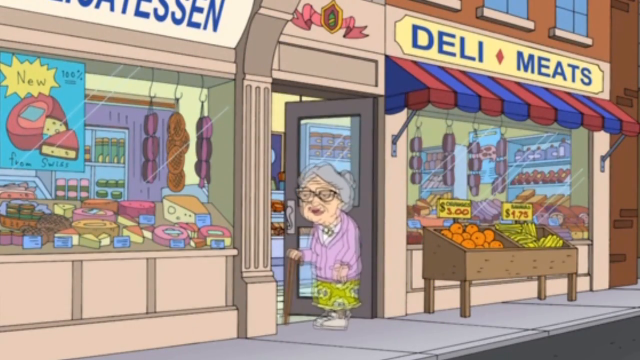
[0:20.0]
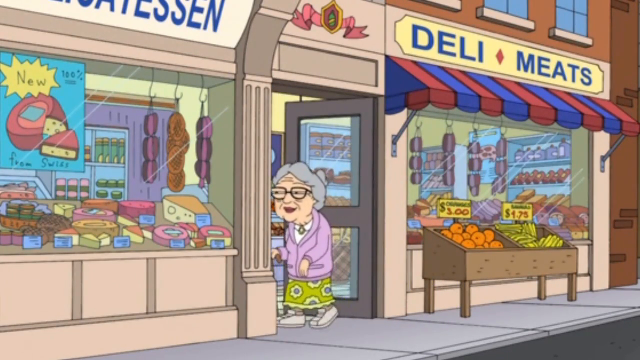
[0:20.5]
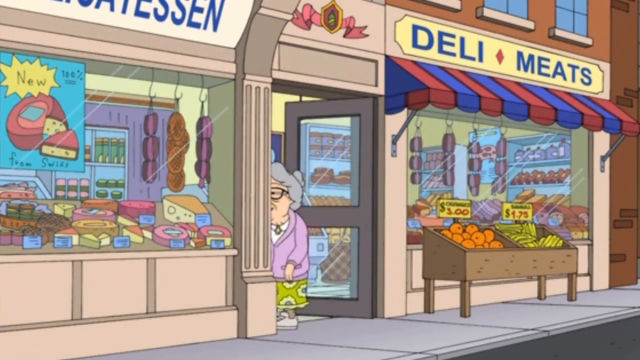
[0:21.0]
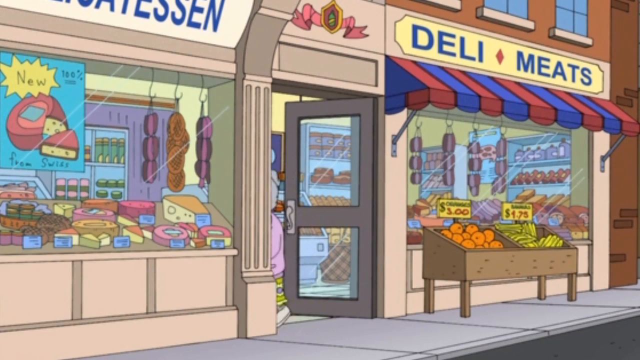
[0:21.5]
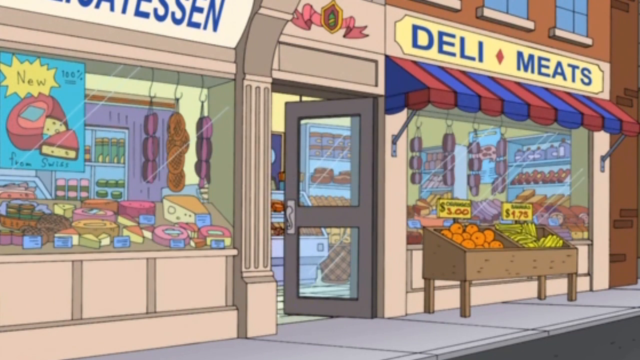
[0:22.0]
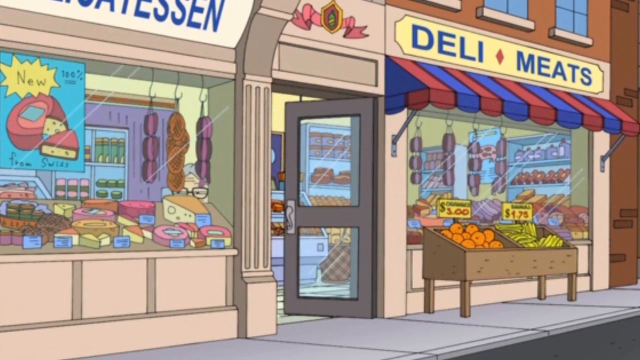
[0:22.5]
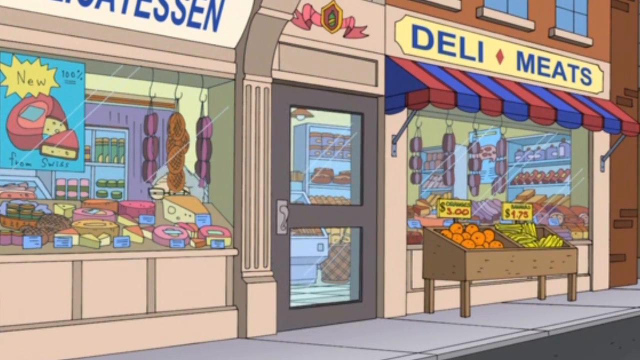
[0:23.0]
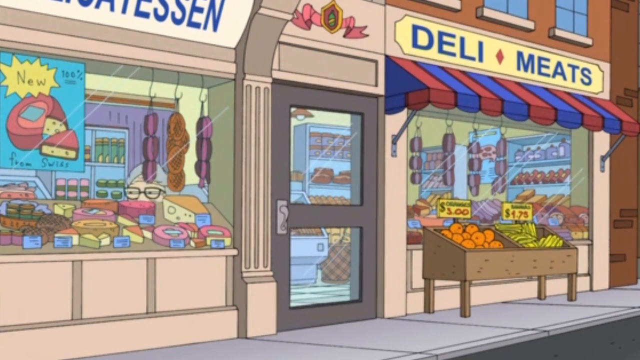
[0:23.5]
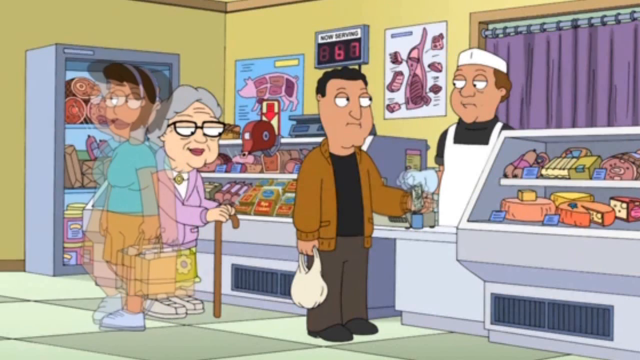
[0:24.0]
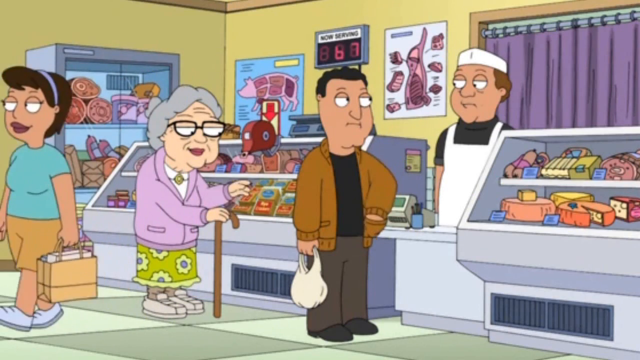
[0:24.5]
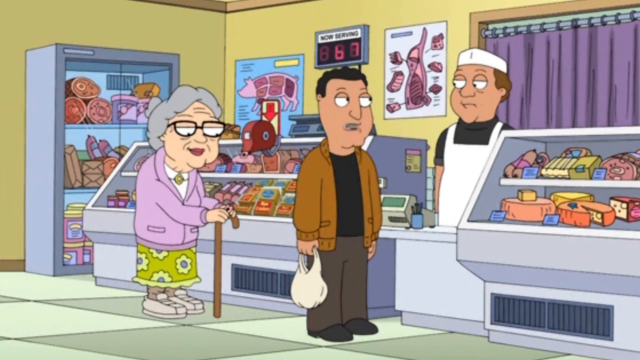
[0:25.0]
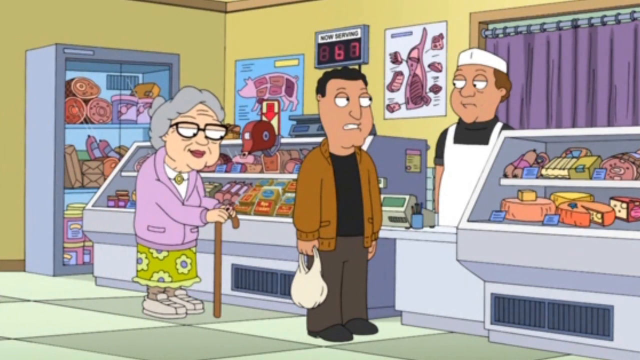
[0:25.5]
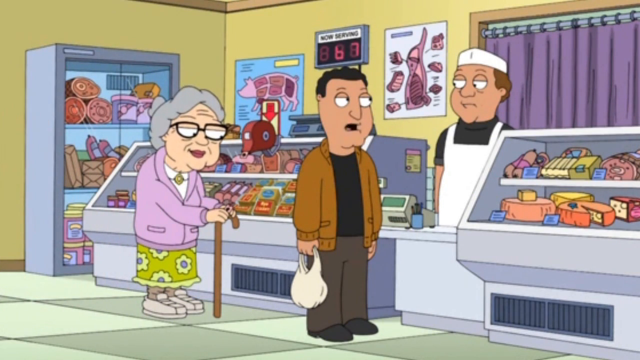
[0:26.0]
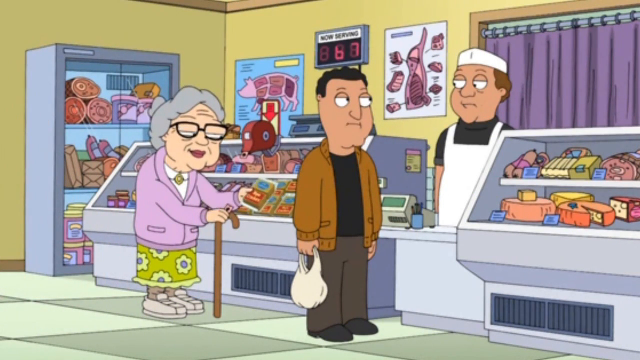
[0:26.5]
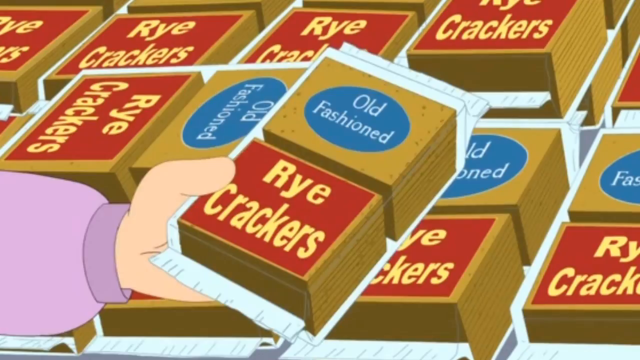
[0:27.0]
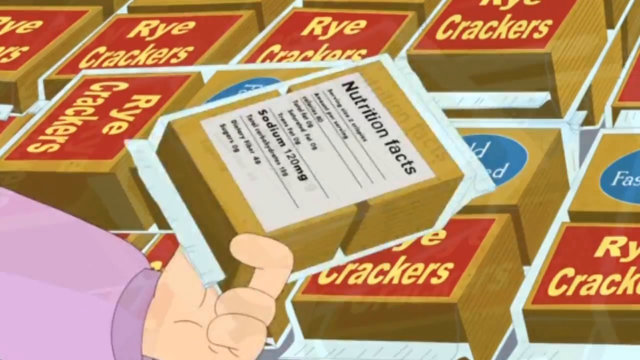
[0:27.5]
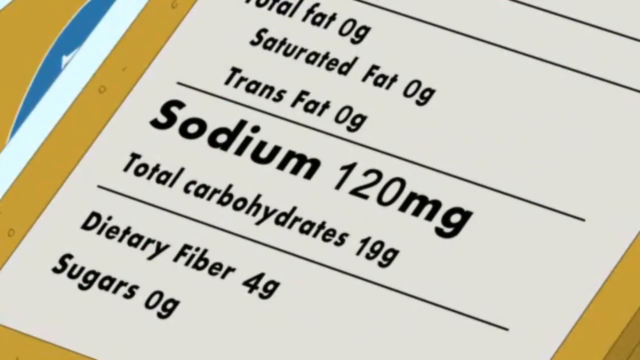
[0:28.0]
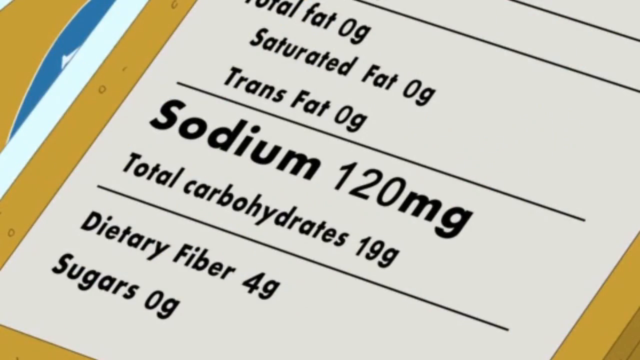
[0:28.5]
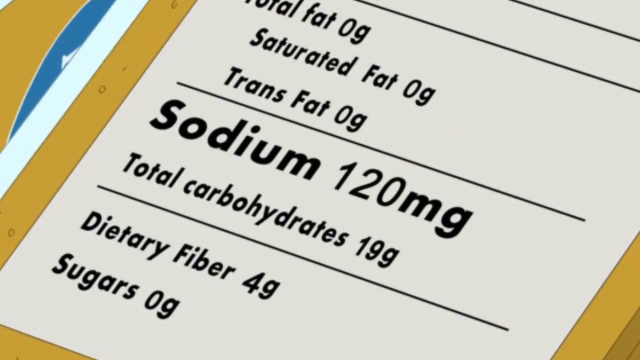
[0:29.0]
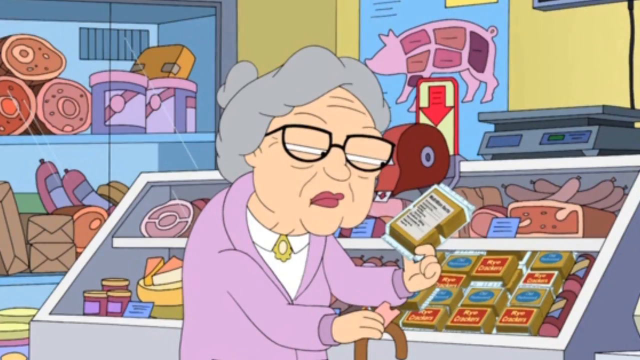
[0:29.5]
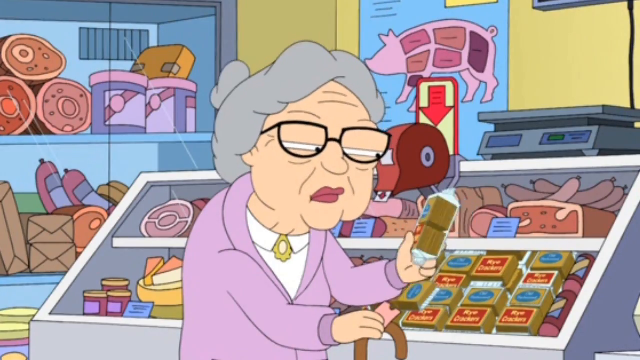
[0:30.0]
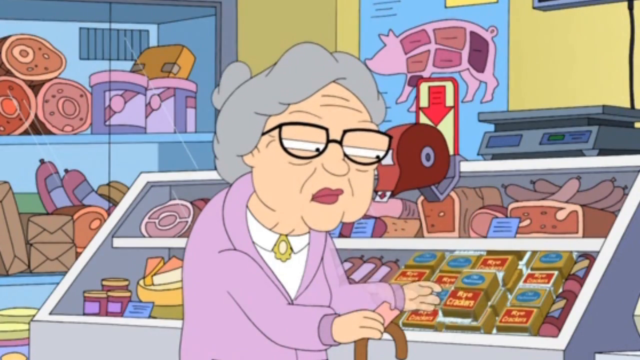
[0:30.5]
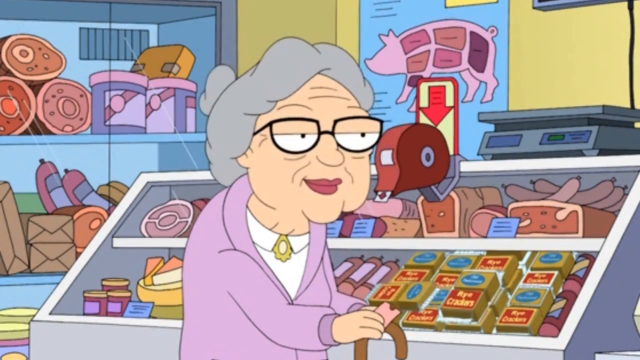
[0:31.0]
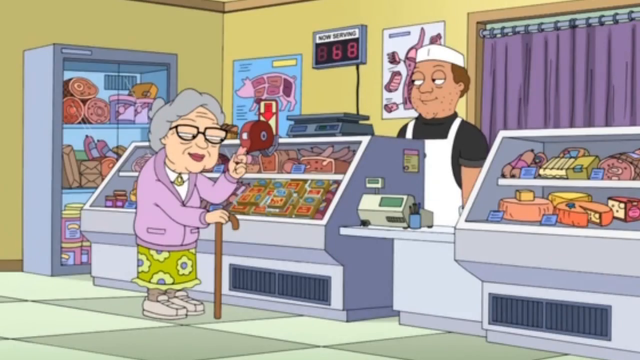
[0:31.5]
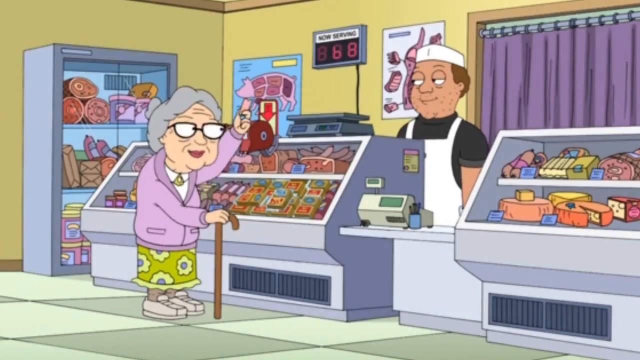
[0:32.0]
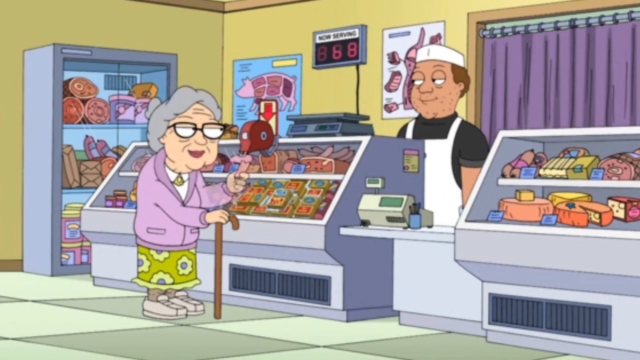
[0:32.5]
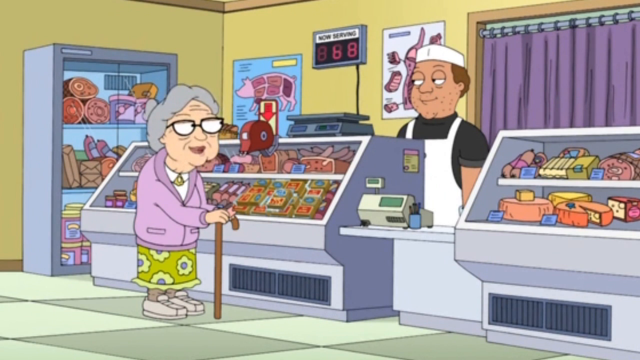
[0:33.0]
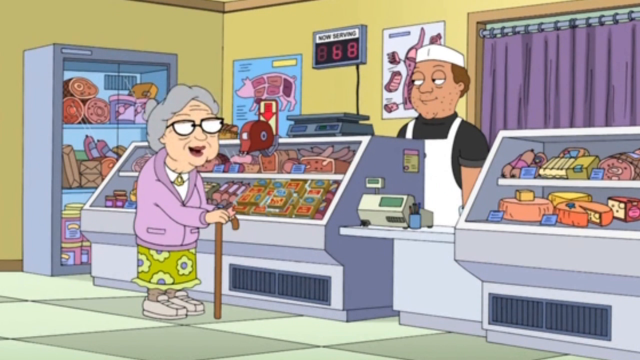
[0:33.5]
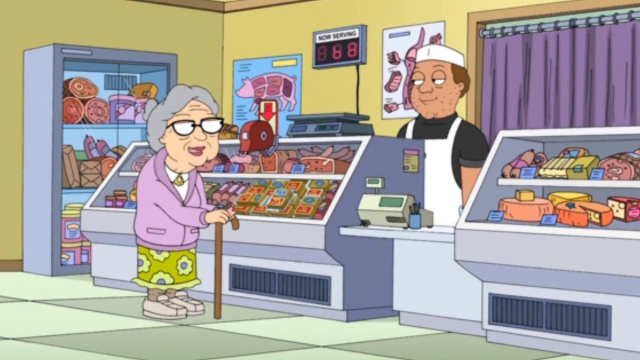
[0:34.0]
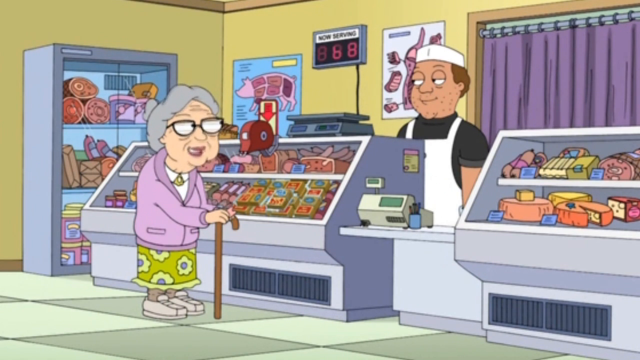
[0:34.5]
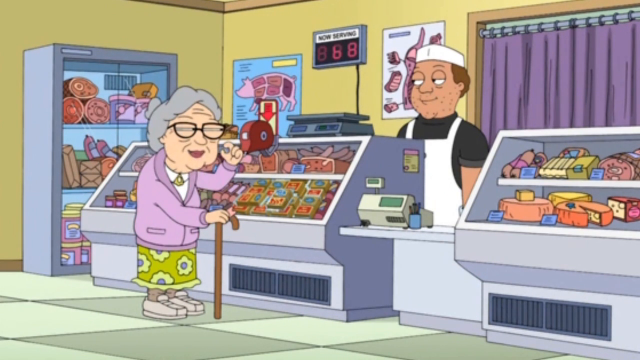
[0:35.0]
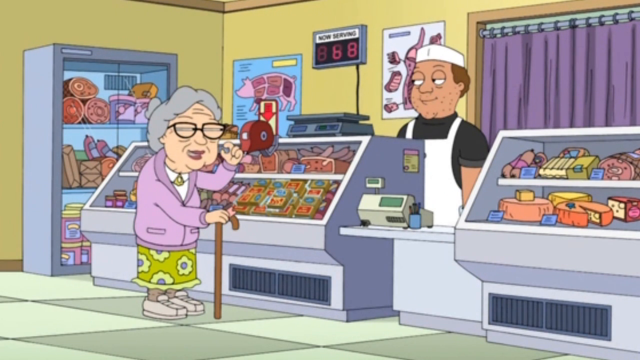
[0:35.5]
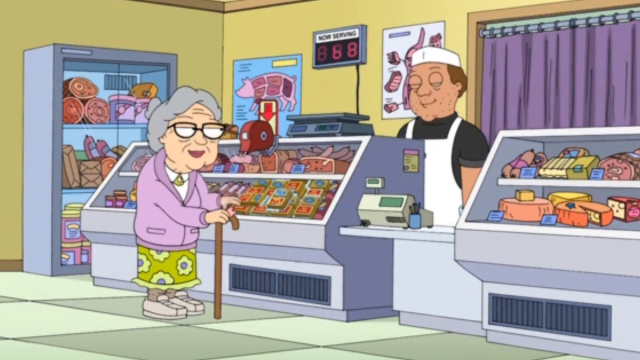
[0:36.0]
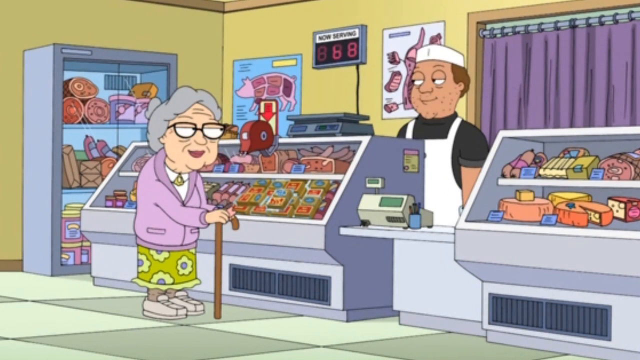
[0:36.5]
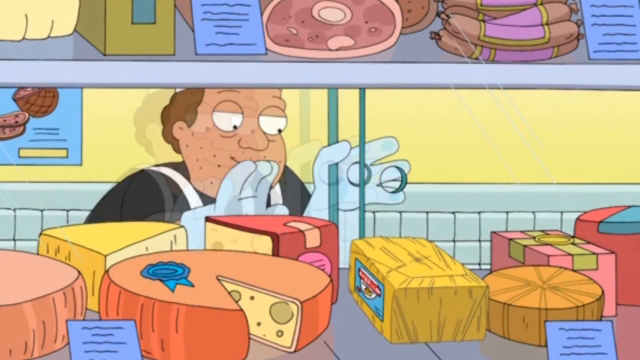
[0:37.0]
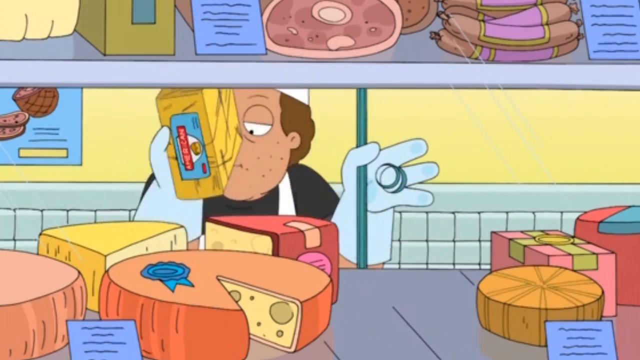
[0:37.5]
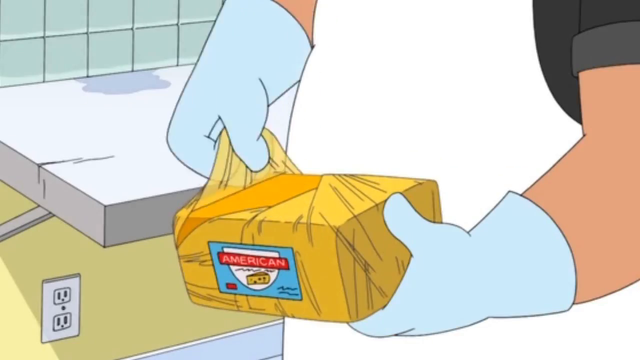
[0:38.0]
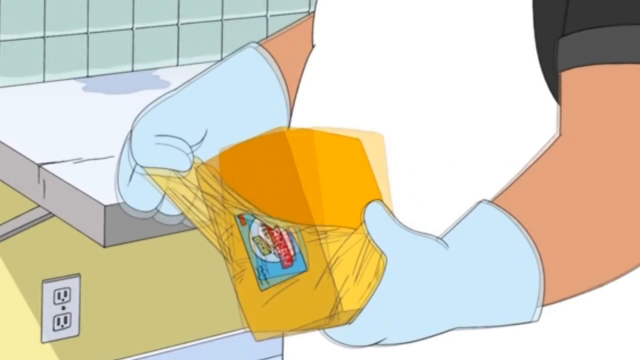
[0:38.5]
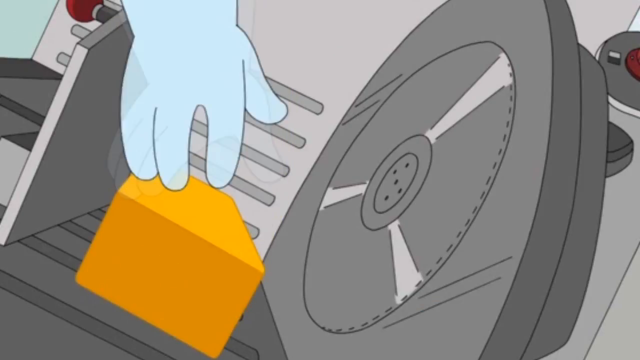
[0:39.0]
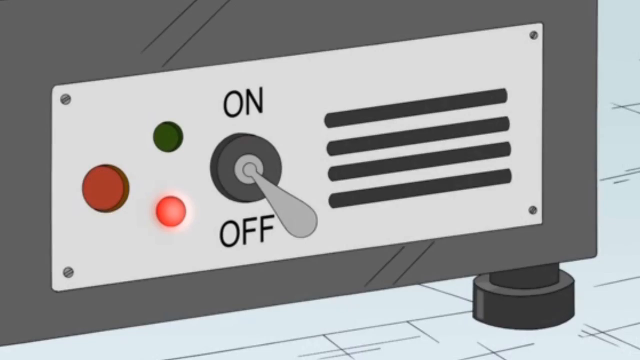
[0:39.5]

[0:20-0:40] The old lady, dressed in purple, walks into the deli, and the door closes behind her. She goes to the counter, where a man in front of her is talking with the deli person. She is looking at what is apparently some cheese and talking with the butcher. Apparently only three people are shown in the store: the butcher, the patron in front of her, and the lady. While waiting, she browses the deli counter and selects some cheese she wants, then asks the butcher to slice it for her. He unwraps the cheese and gets ready to cut her some slices, turning on the automated meat slicer.